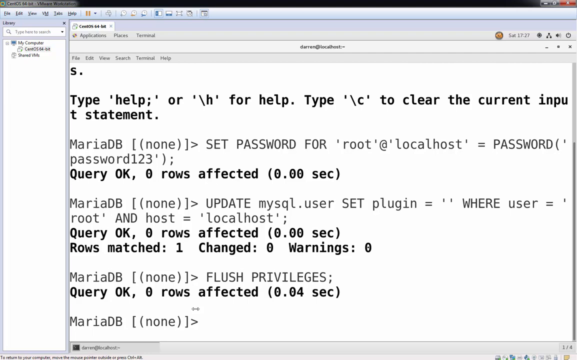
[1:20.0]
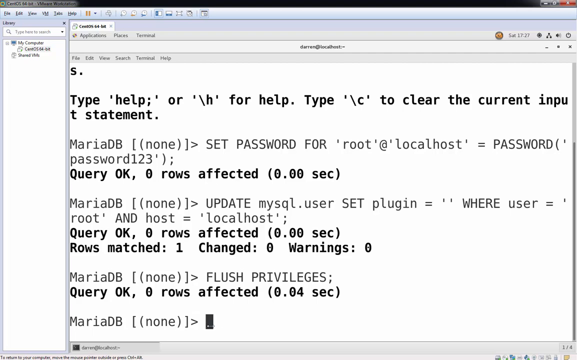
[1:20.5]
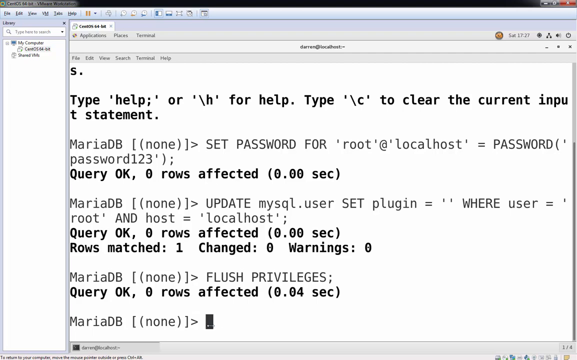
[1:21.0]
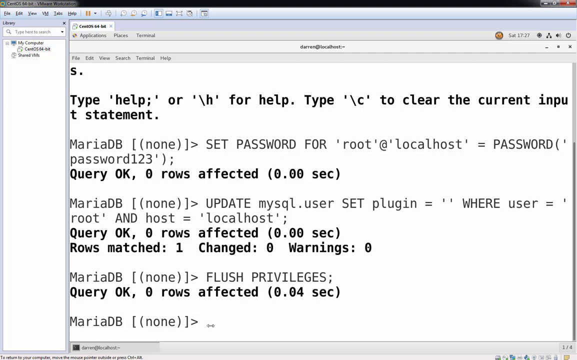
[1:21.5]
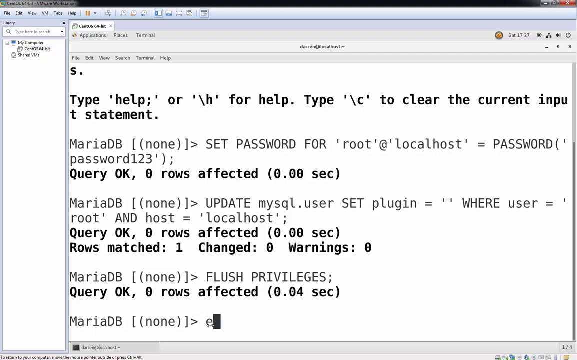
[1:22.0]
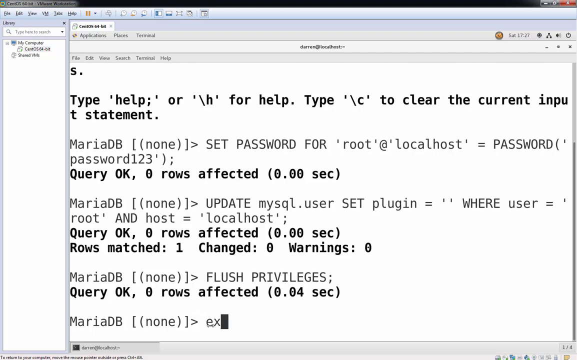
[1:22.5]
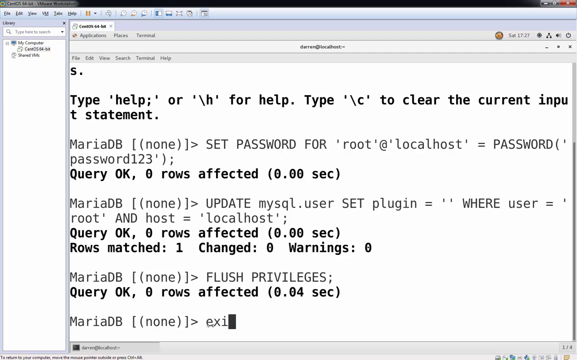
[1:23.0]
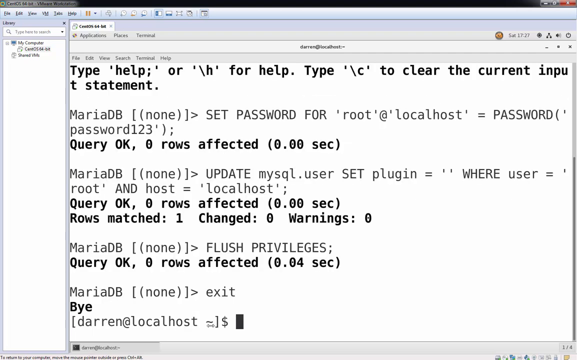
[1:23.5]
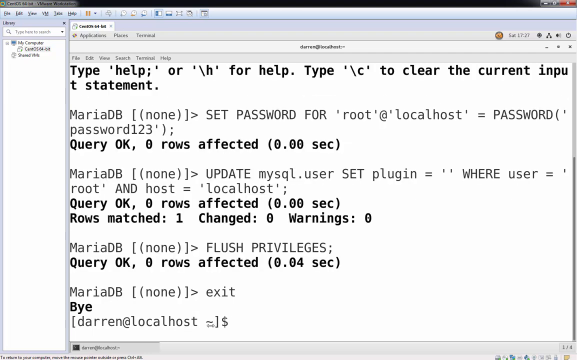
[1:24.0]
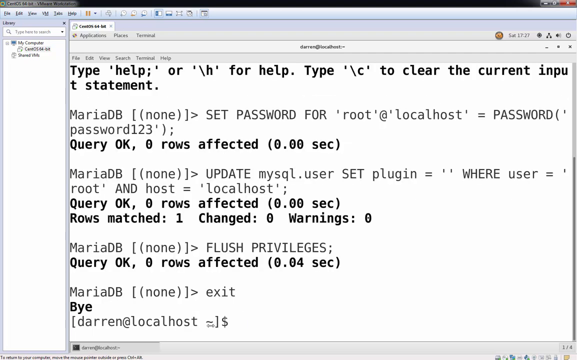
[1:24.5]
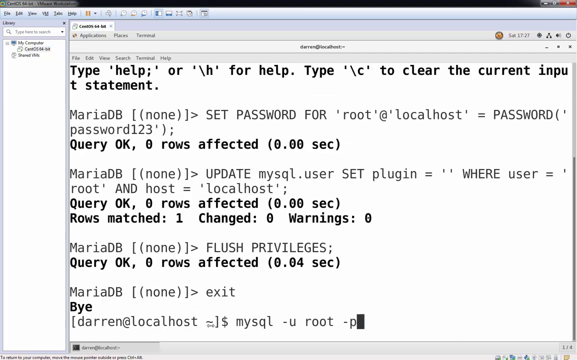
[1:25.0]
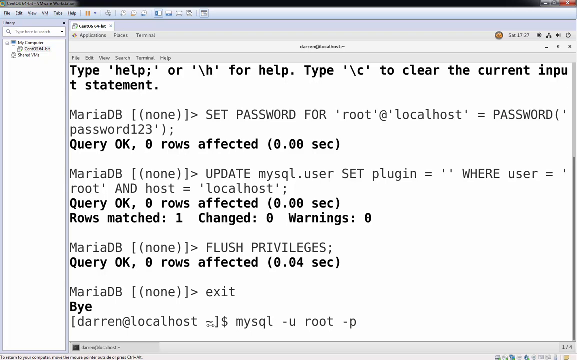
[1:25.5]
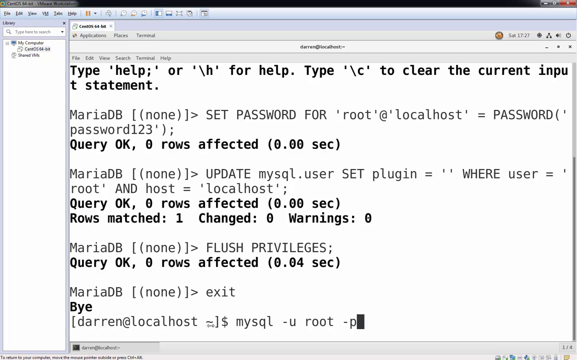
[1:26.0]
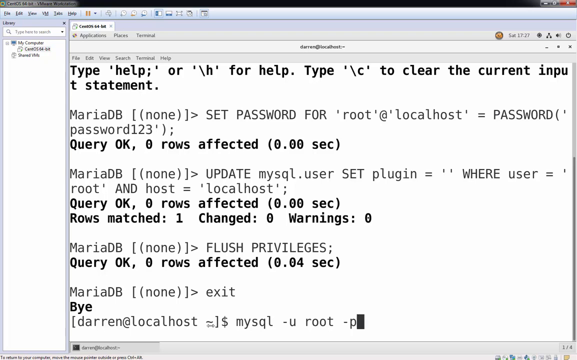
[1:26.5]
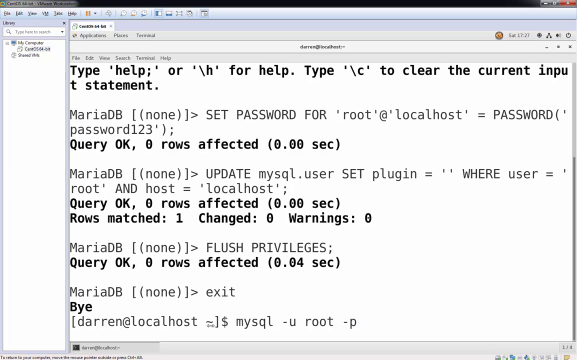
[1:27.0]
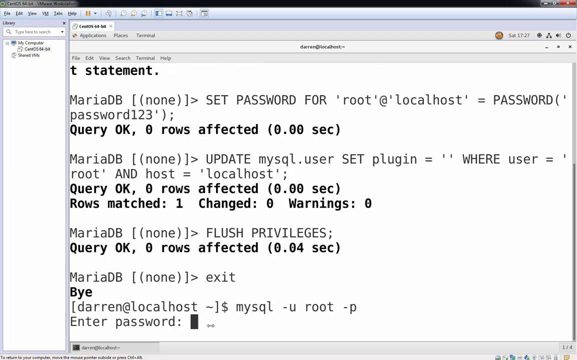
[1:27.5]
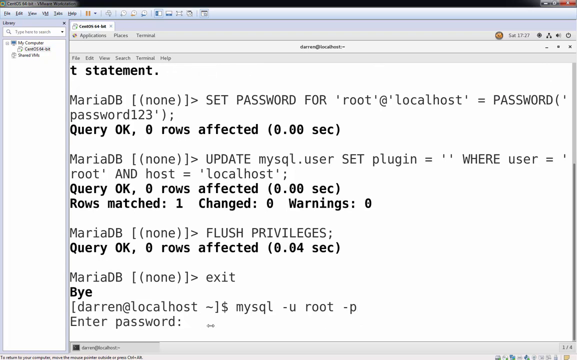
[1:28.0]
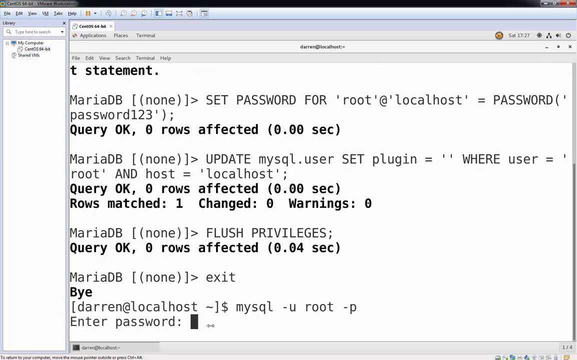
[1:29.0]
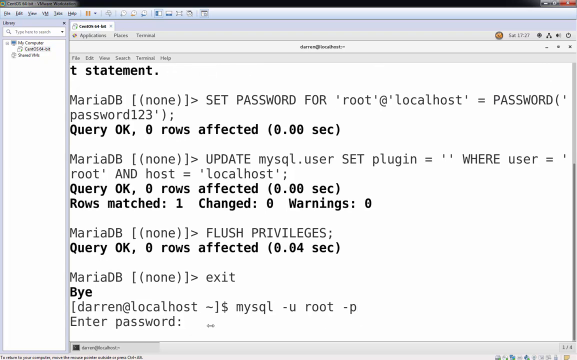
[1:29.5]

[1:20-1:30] With all the previous lines added, the "MariaDB" prompt with "none" in brackets and parentheses is shown with the black square blinking, but this time typing begins. "exit" is typed, and a new line reads "bye". Then comes a bracket, "Darren at localhost", the squiggly line, a bracket and a dollar sign, and "mysql -u root -p" is pasted. The black square blinks again, and then a line reading "enter password:" appears.